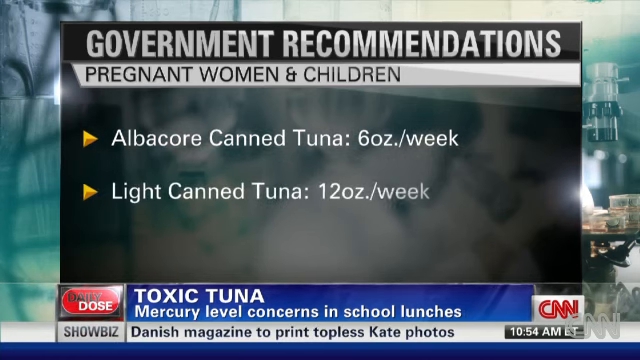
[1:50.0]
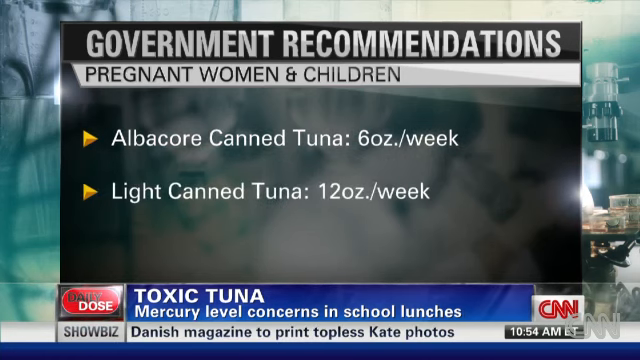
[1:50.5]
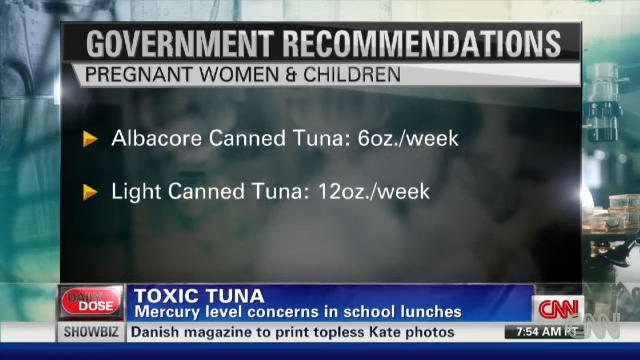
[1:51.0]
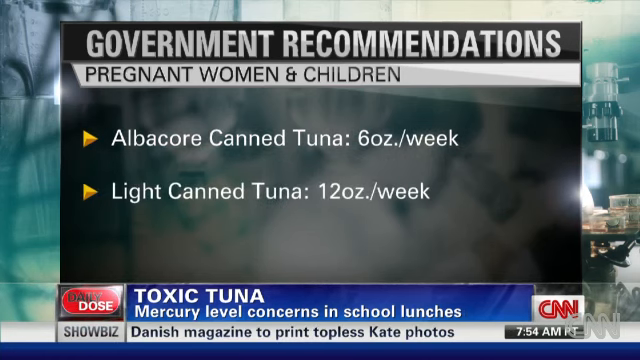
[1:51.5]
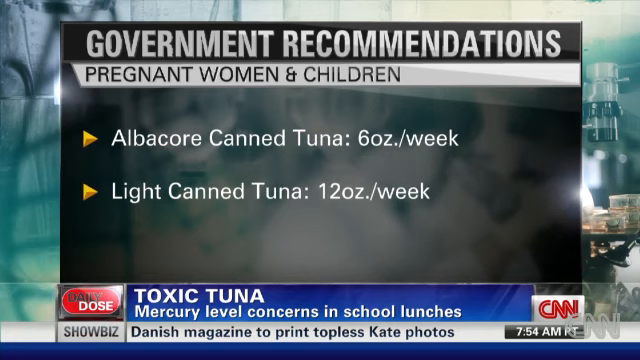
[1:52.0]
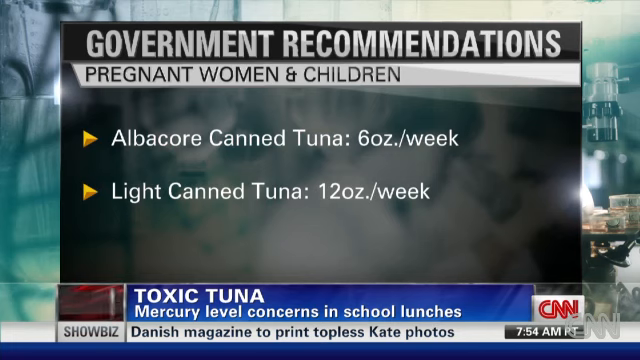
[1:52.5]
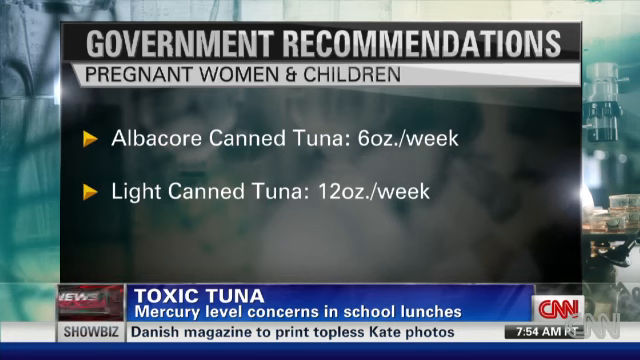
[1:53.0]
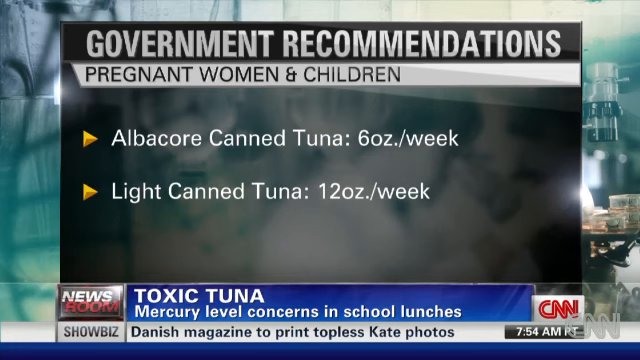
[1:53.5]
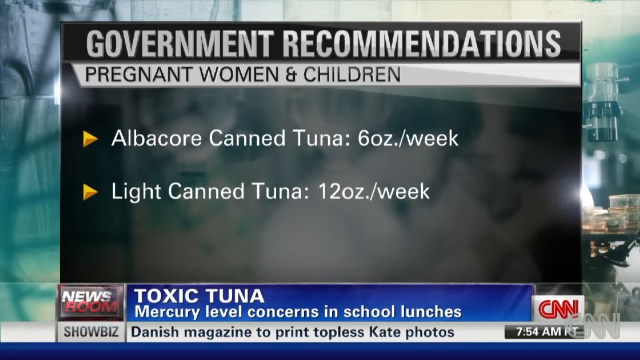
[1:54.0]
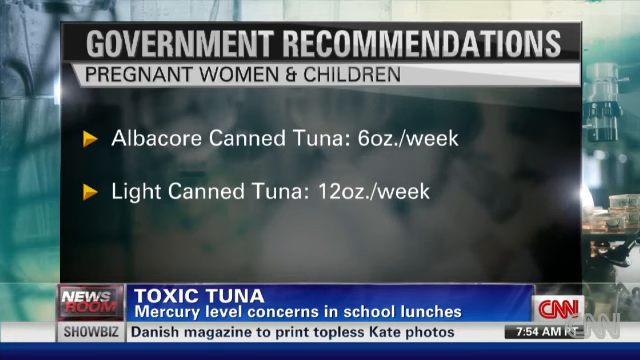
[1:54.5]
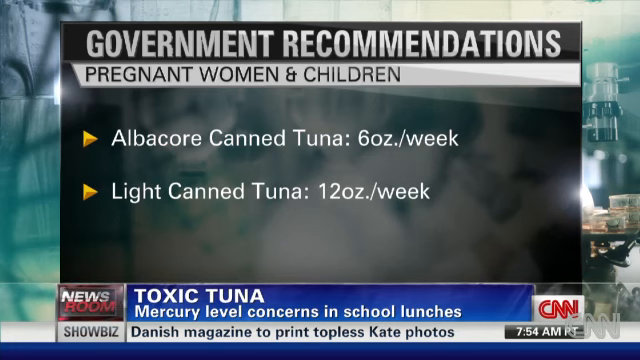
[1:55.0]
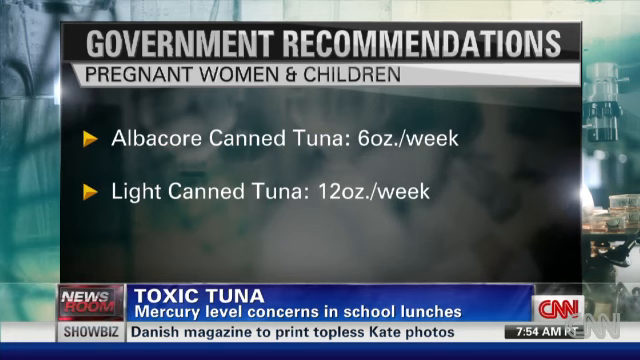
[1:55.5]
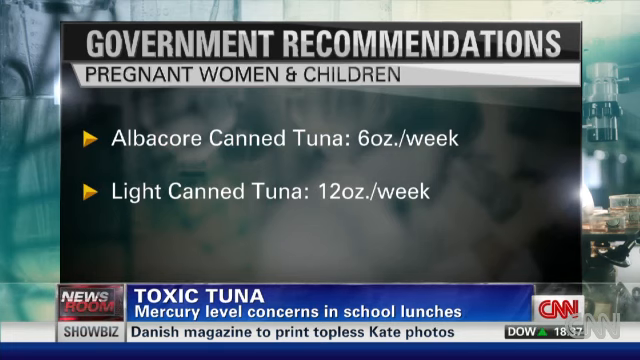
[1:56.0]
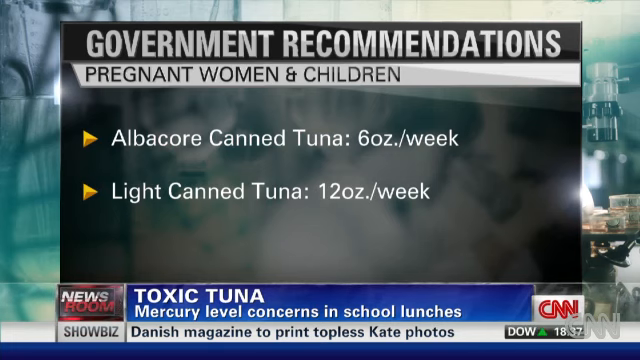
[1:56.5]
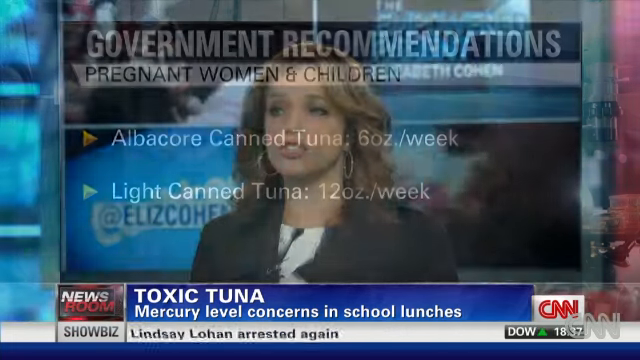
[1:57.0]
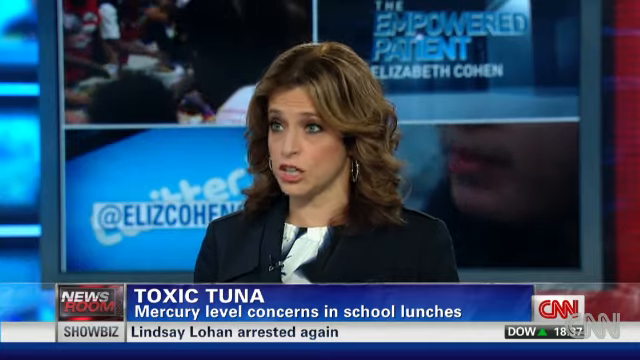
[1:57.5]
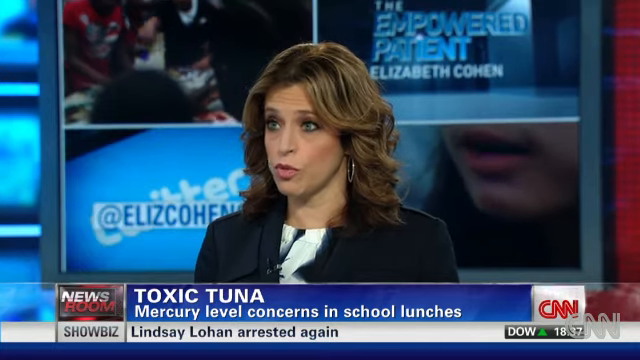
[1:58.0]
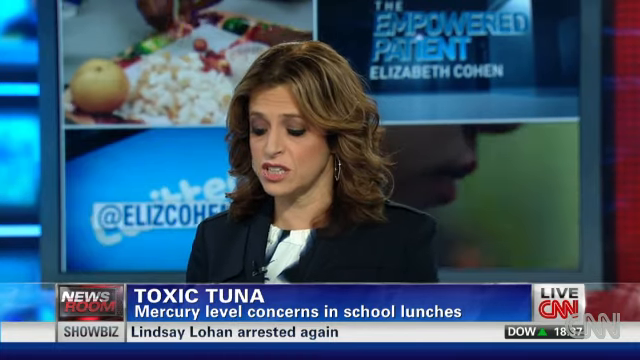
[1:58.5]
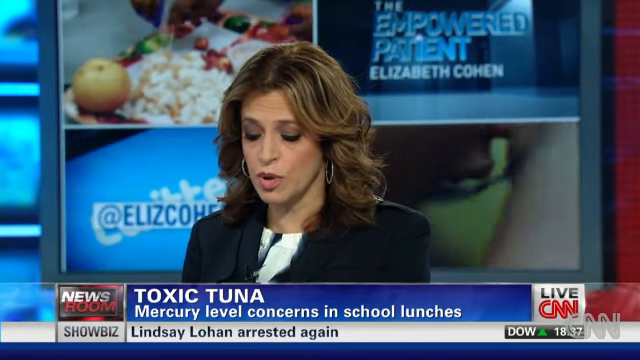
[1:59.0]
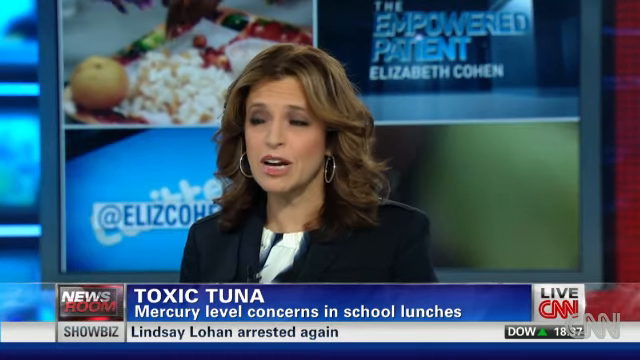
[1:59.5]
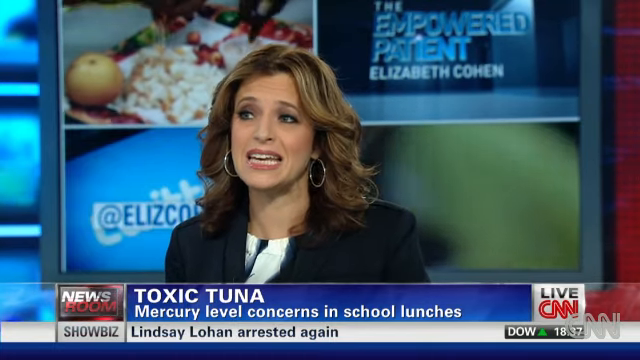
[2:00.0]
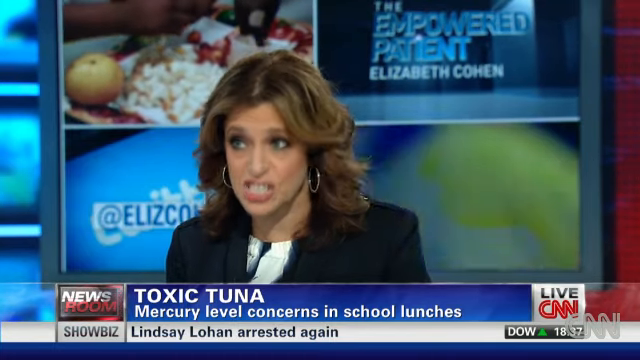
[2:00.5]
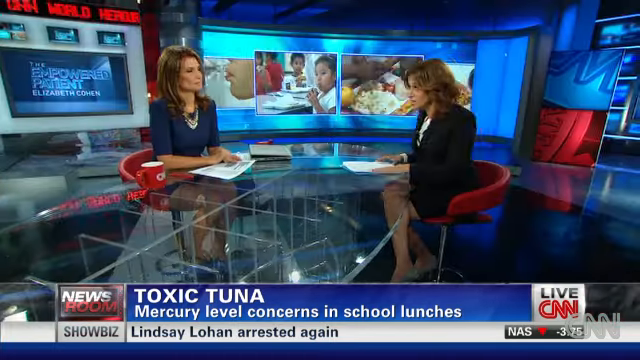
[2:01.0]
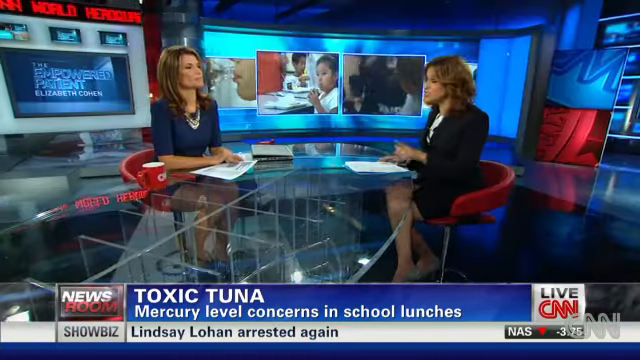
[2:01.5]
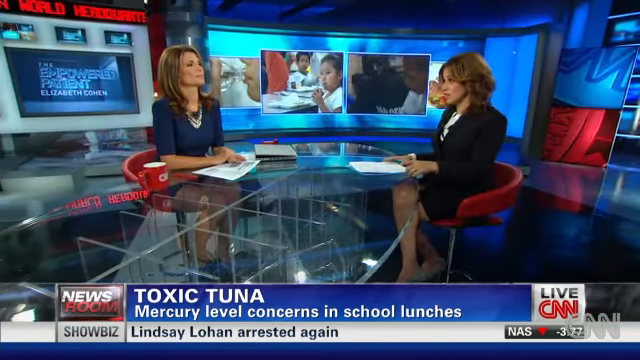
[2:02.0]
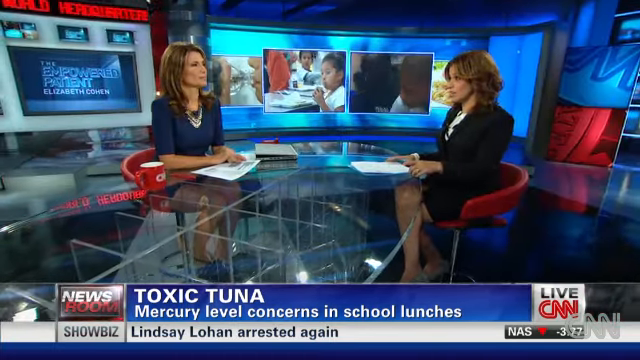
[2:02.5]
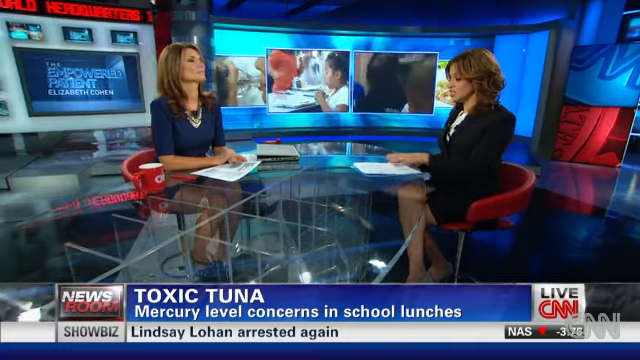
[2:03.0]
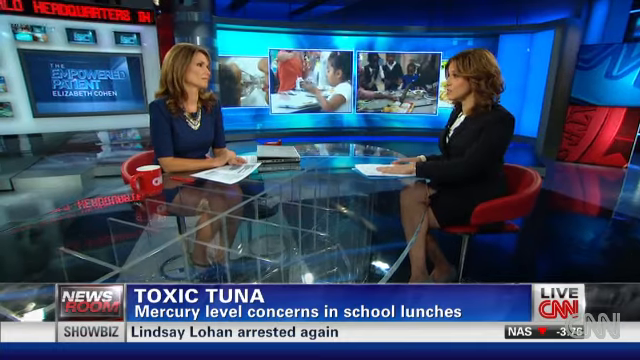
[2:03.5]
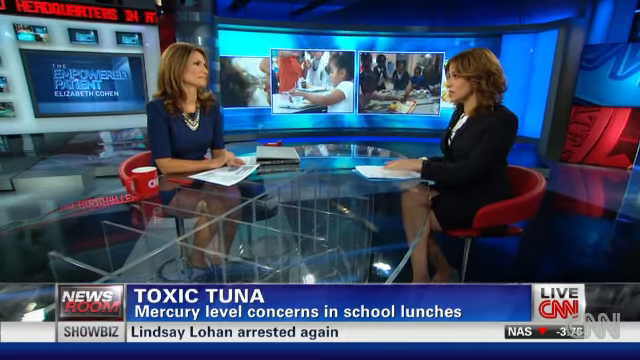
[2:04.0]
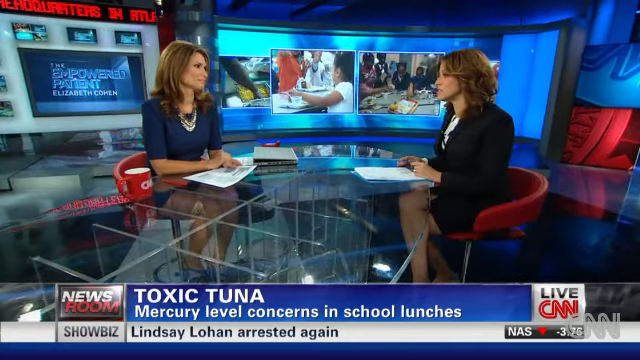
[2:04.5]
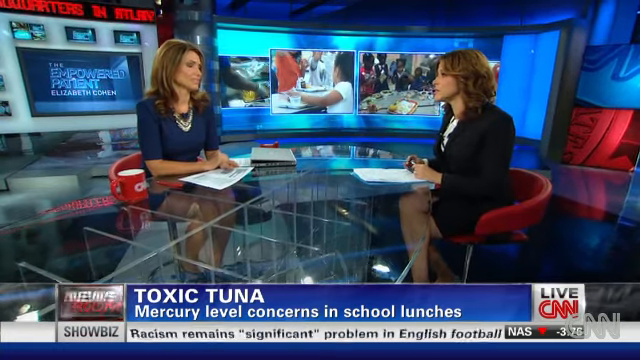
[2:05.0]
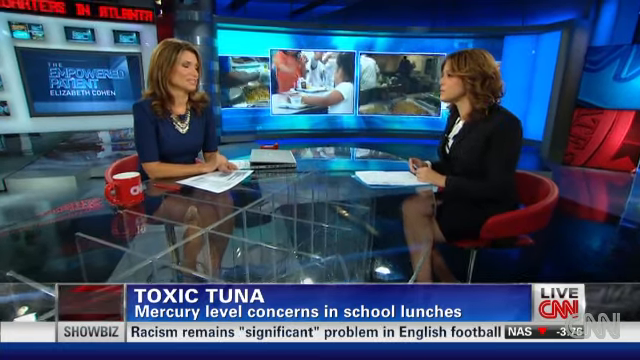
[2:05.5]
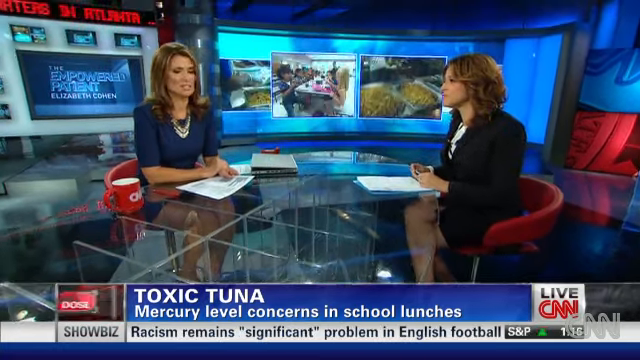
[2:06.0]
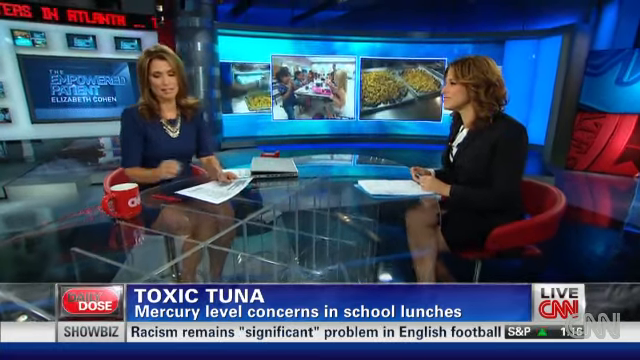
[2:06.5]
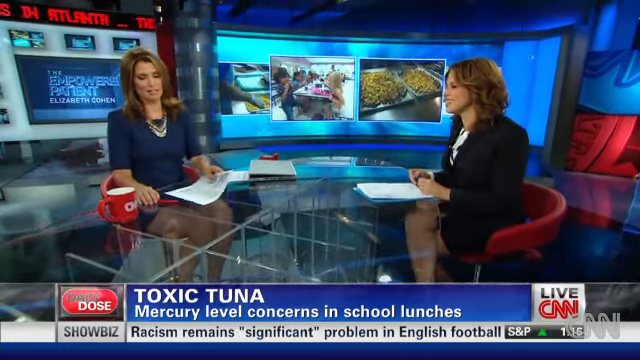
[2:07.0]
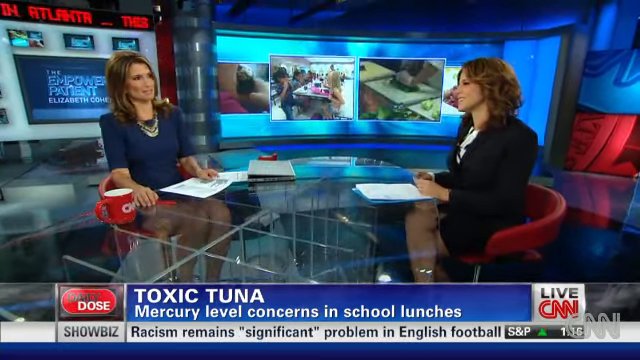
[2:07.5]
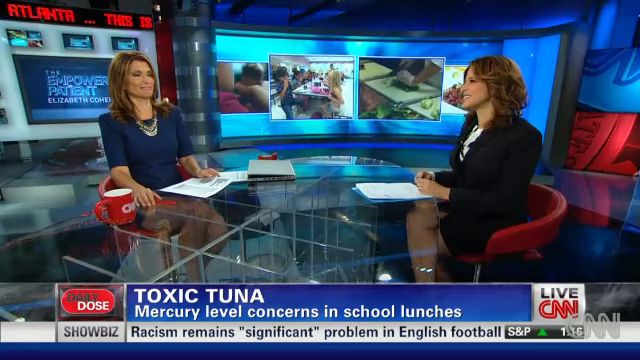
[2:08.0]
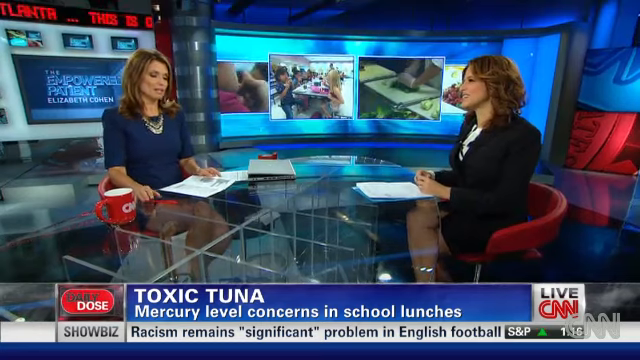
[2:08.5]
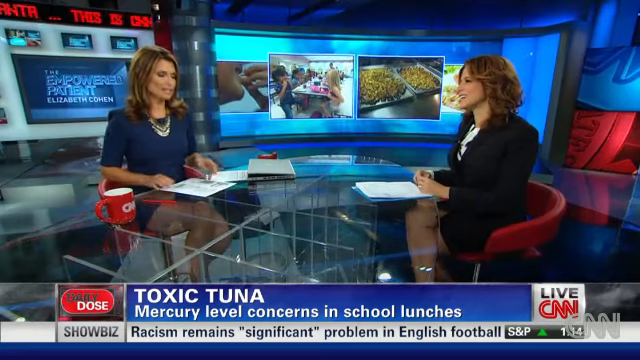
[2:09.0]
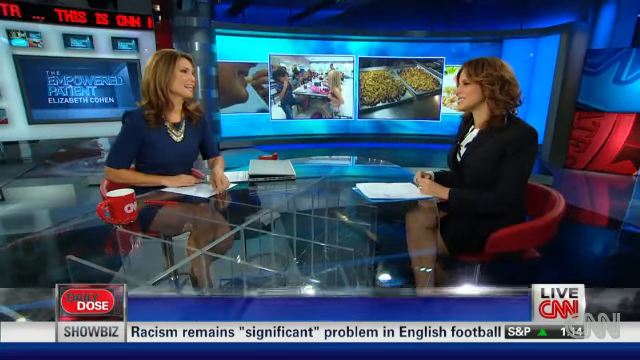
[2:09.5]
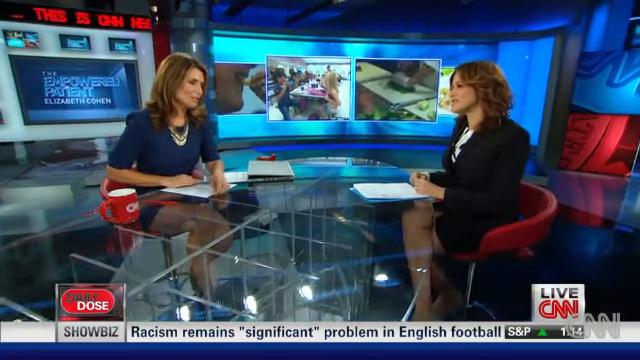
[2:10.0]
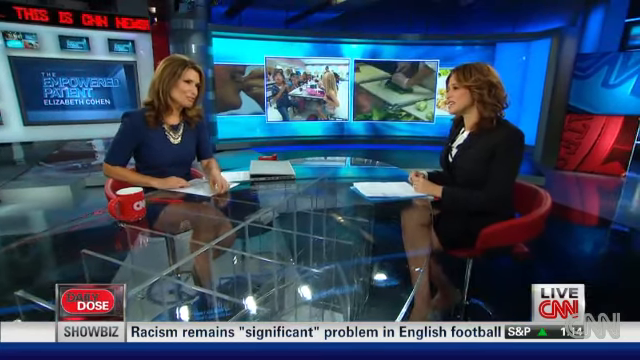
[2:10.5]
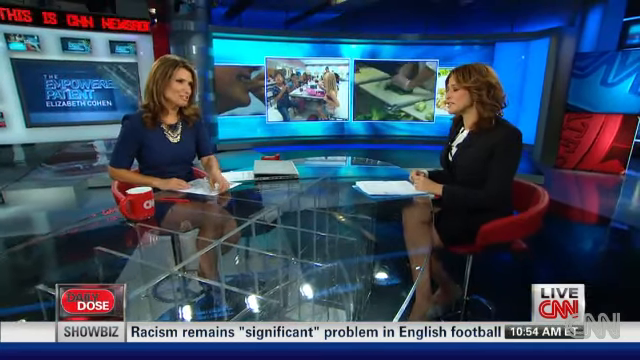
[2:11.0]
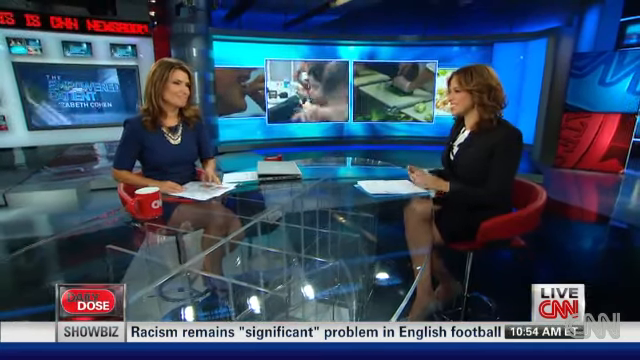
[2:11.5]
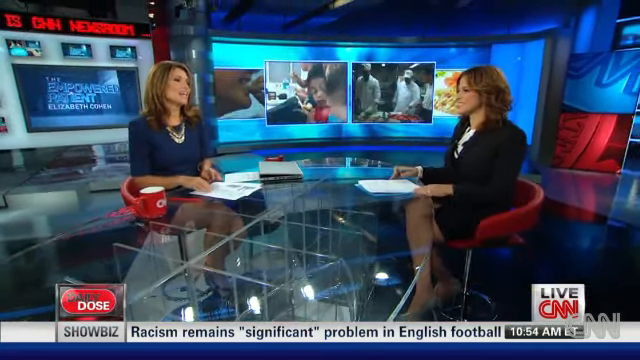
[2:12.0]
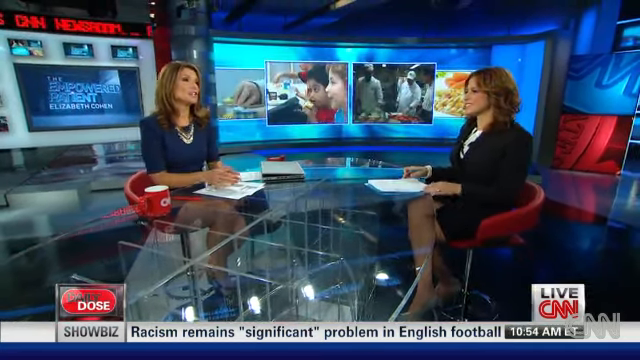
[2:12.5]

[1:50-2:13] Text reads "government recommendations pregnant women and children", "albacore canned tuna six ounce per week" and "light canned tuna no more than 12 ounces per week". Then the other woman is talking some more. More clips of little kids are shown, and the screen seems very busy, with various gifs.